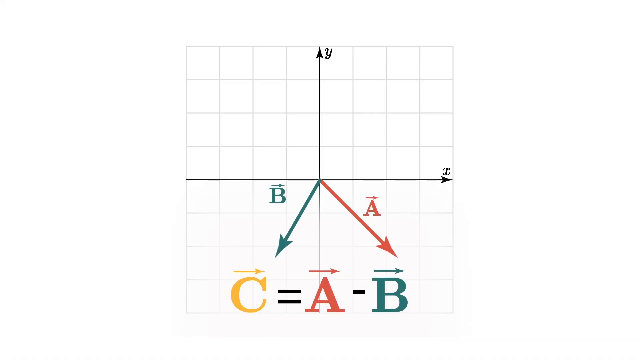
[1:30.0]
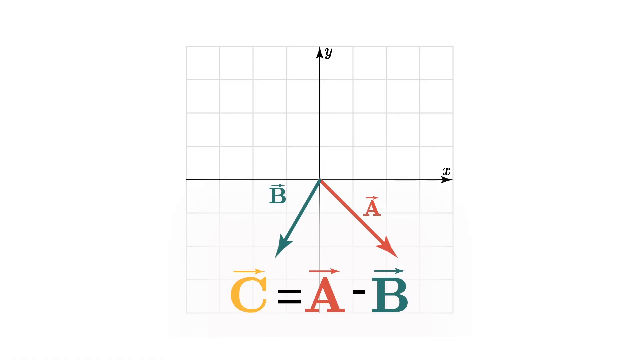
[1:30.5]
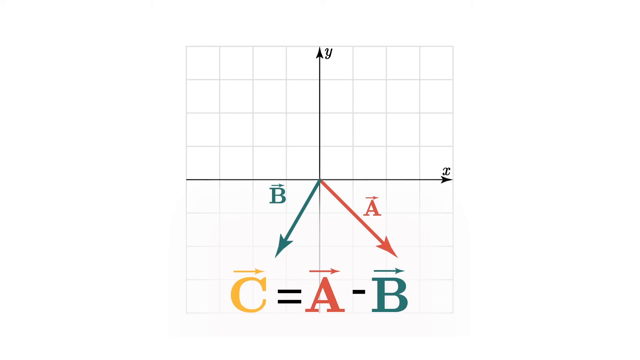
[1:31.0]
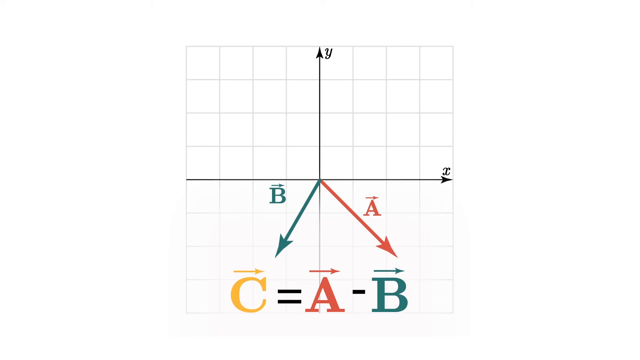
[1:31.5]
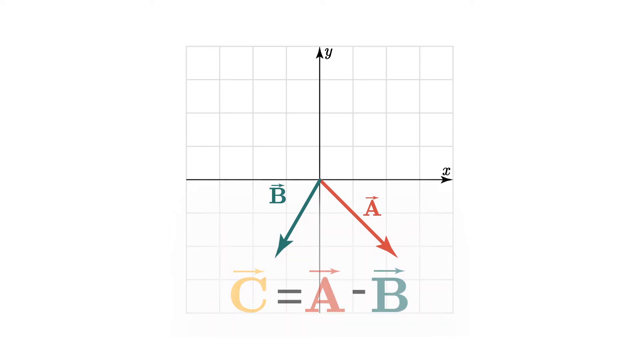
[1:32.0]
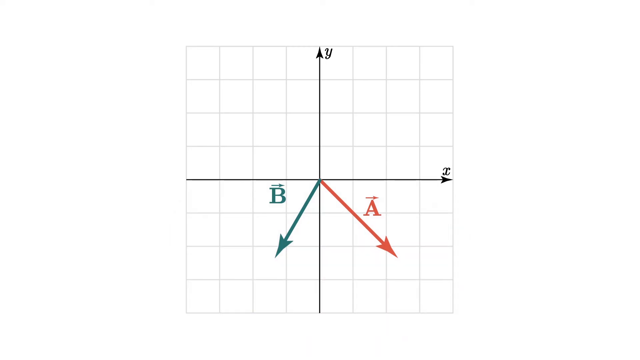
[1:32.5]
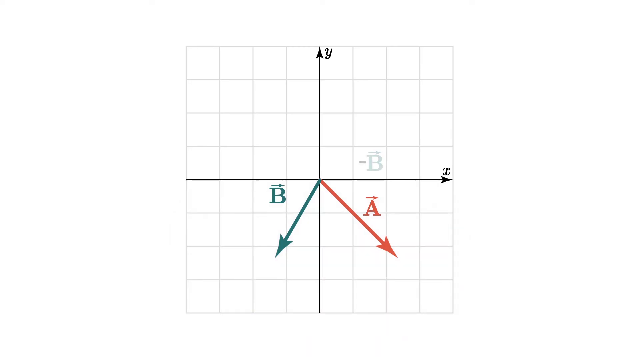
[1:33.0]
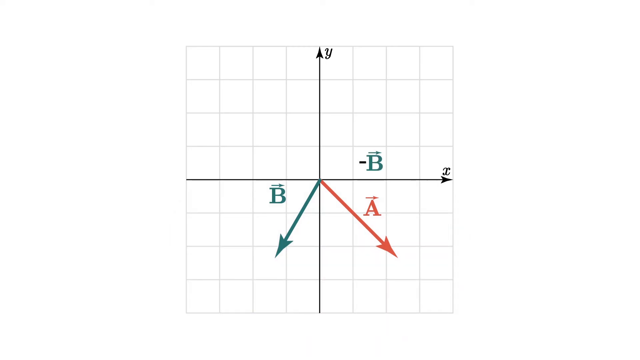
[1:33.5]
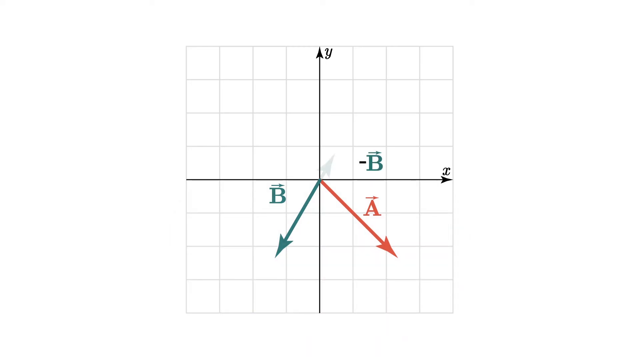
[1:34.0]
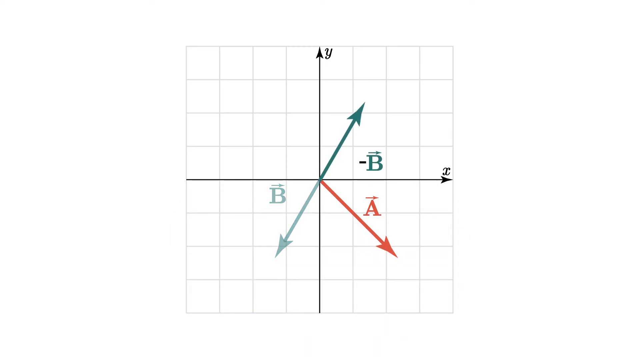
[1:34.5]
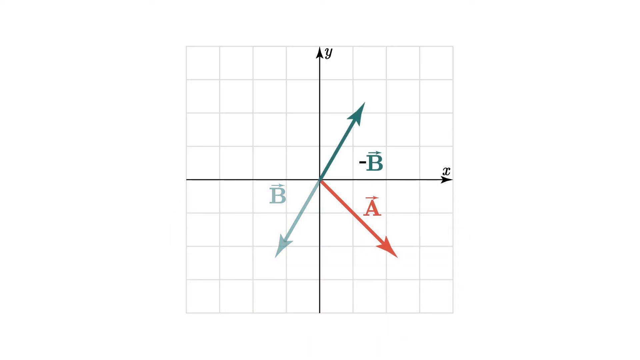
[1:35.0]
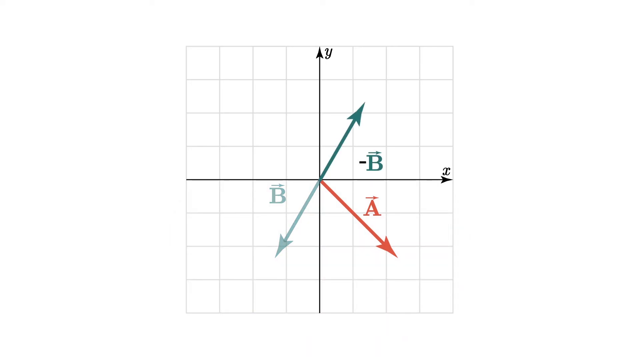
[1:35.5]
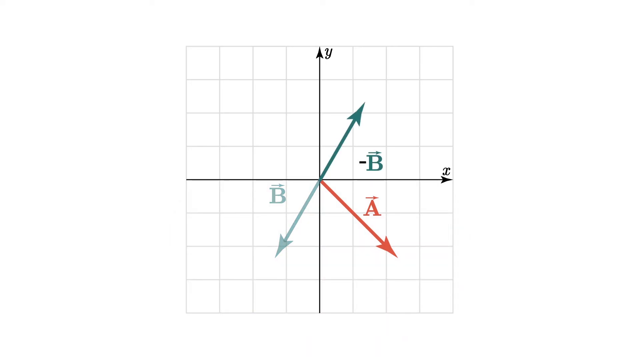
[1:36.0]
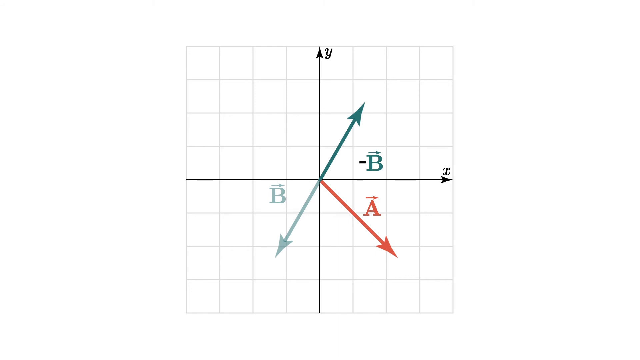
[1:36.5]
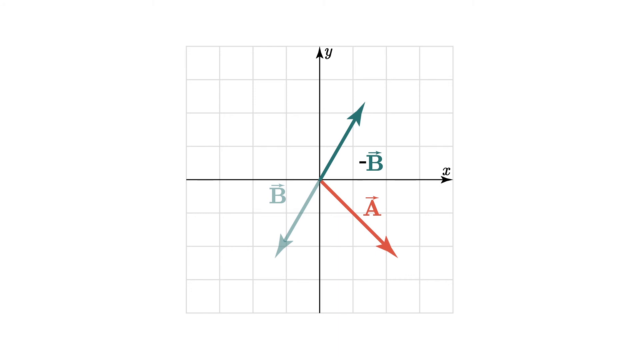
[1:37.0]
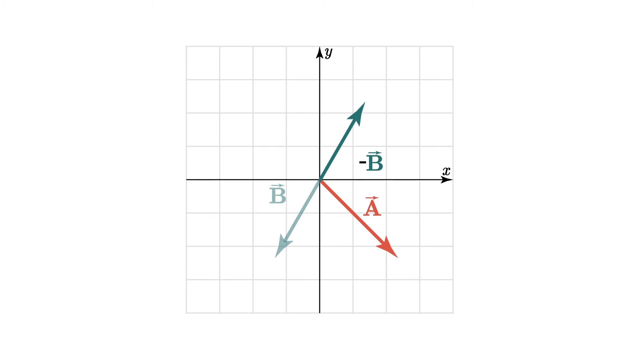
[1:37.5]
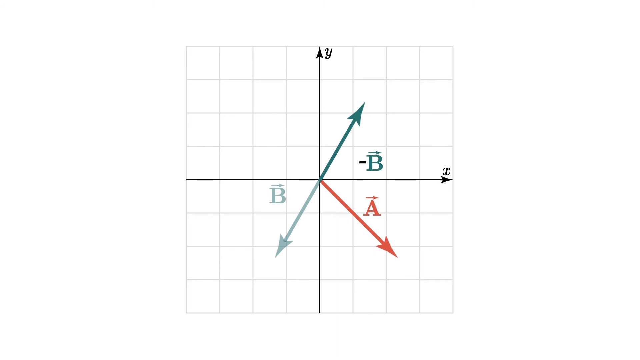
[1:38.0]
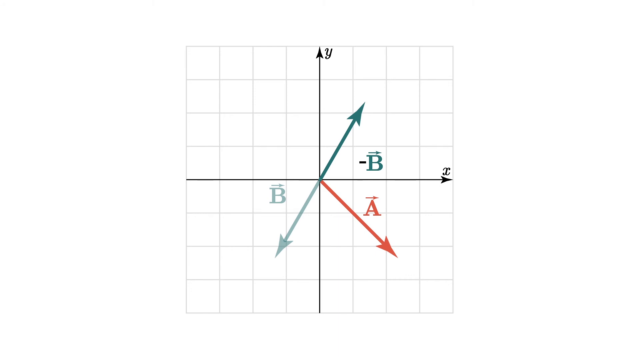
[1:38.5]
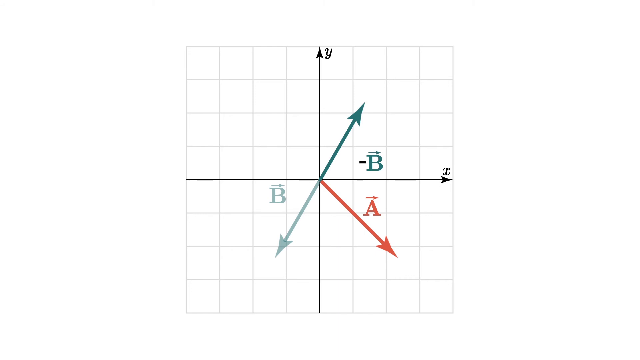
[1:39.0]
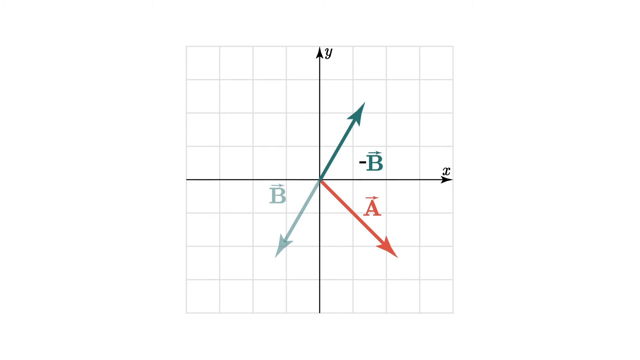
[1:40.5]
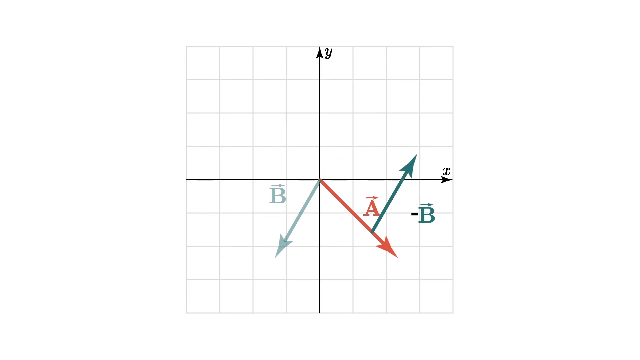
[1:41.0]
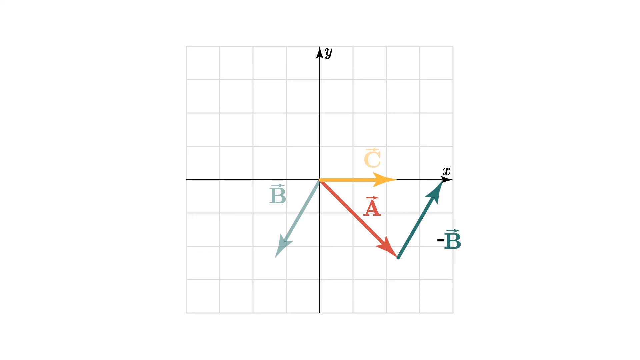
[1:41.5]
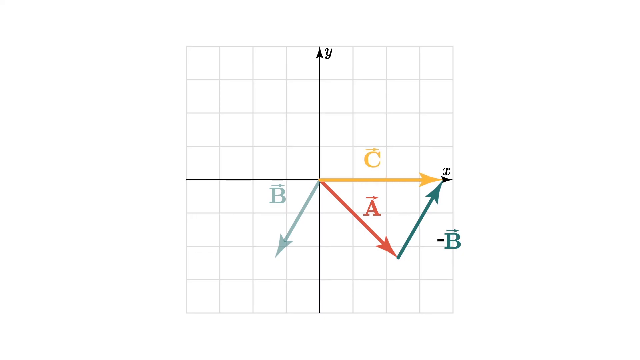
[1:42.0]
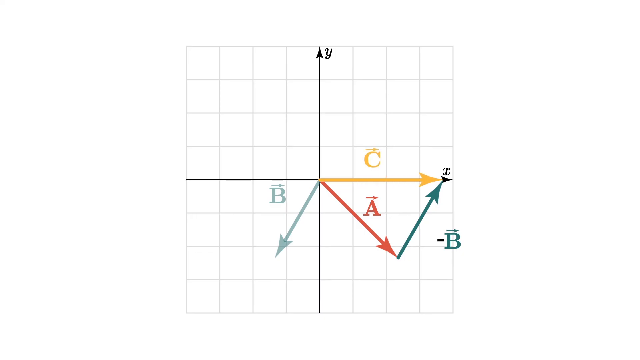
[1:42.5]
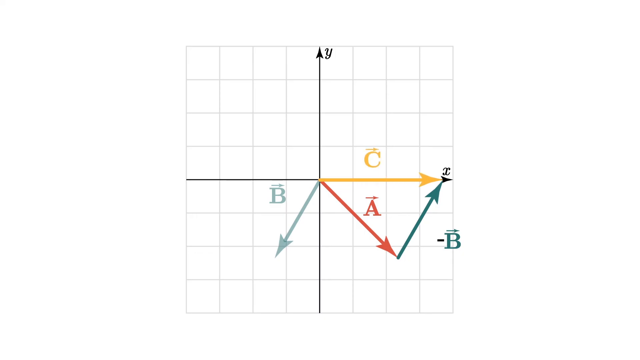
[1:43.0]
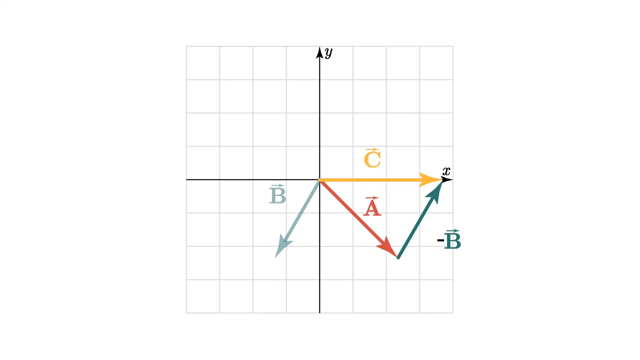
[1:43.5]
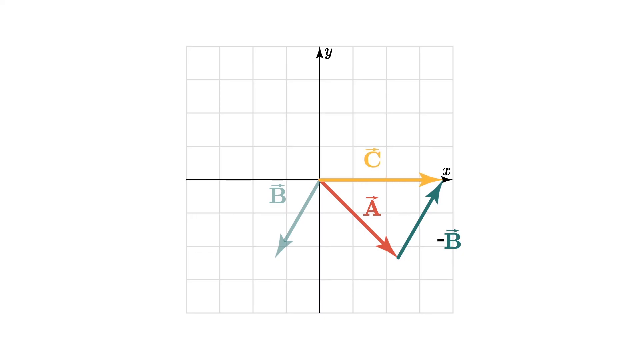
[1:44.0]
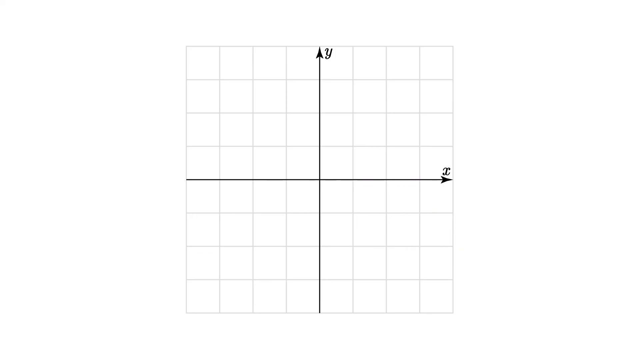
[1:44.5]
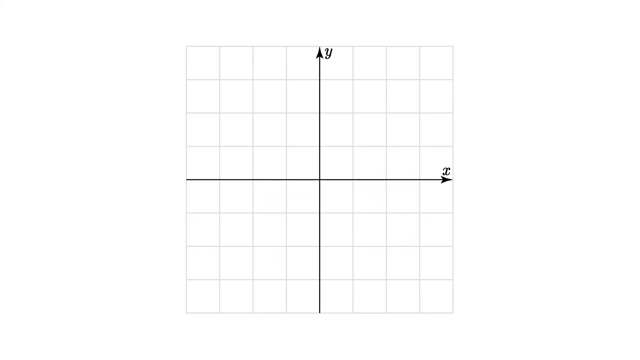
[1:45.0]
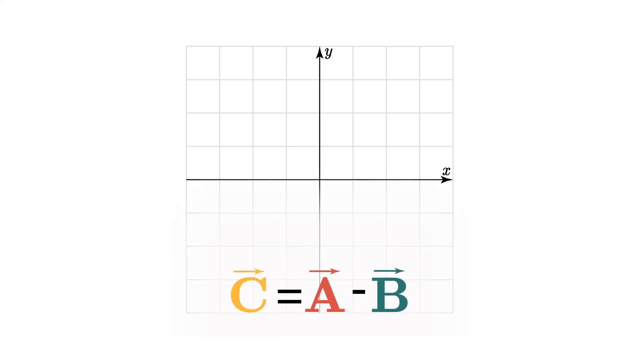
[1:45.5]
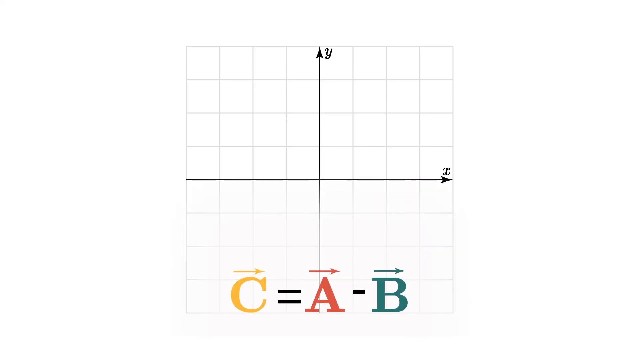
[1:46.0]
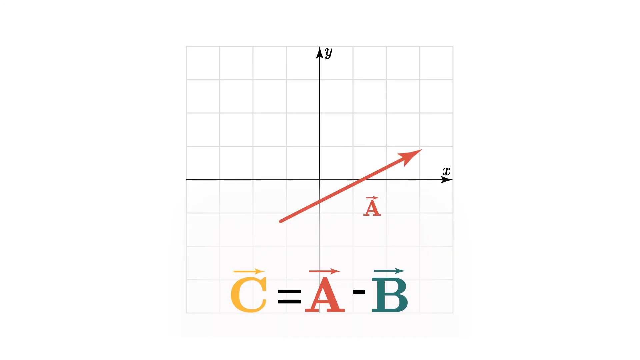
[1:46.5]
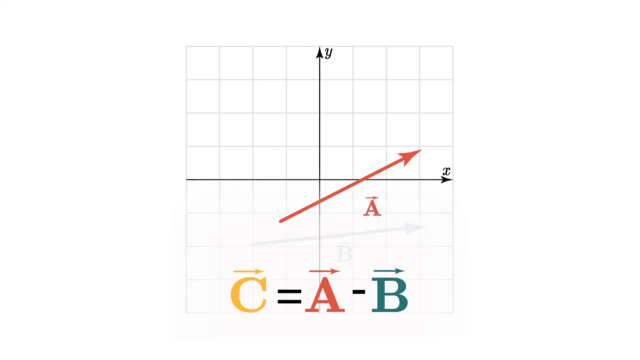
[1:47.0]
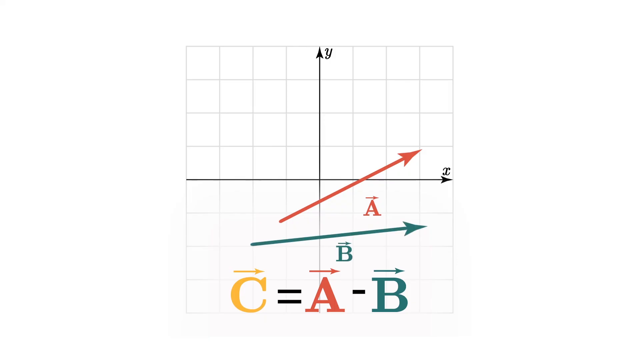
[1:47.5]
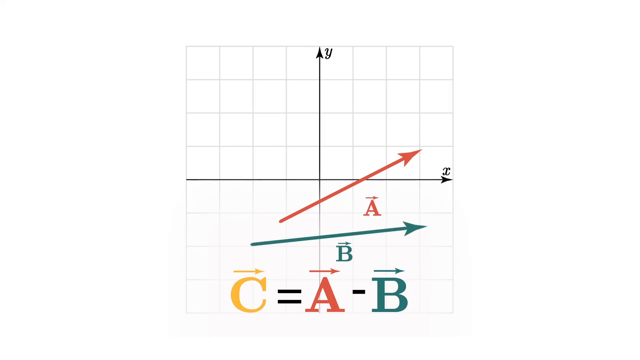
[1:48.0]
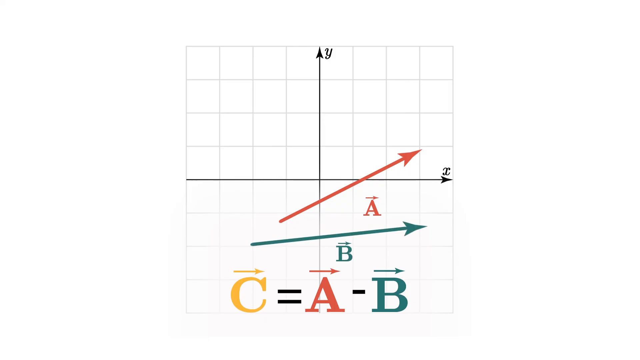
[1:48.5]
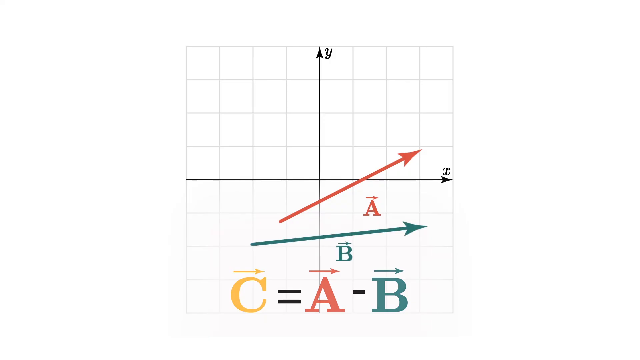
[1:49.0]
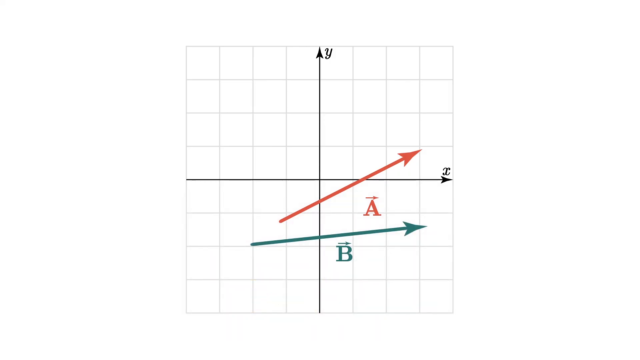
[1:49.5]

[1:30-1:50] This science video, called Vectors, shows the black X and Y axis on graph paper eight squares across and eight squares down, with much of the white screen empty. At the bottom it reads: a yellow capital C, a black equals sign, a rust-colored A with an arrow above it, minus B with an arrow above it. On the negative side of X, a diagonal down arrow runs from the first square through the second into the top of the third, labeled B, with the arrow going to the right. A similar arrow goes from the right-hand positive side of X all the way down two and a half squares, labeled A. Then a negative B pops up, with an arrow coming from the origin on the positive side of X and Y and going up two and a half squares; the arrows all match, though the rust one might be a little farther. Suddenly the B slides down diagonally from the point of the A back up to the X line, labeled "negative B". Then a gold C appears, running right along the X axis from the origin.